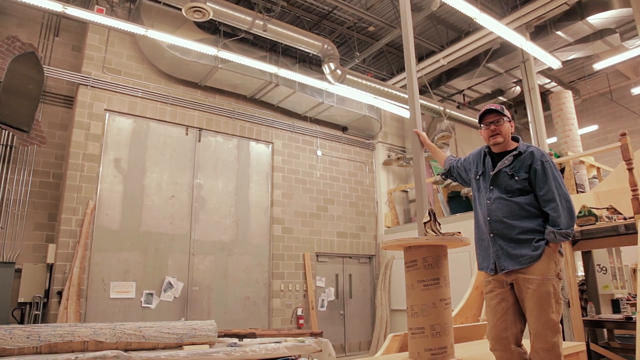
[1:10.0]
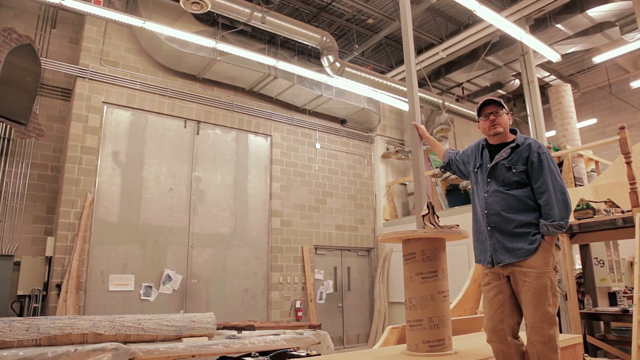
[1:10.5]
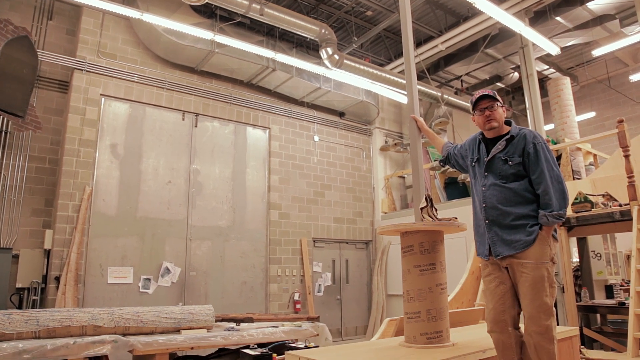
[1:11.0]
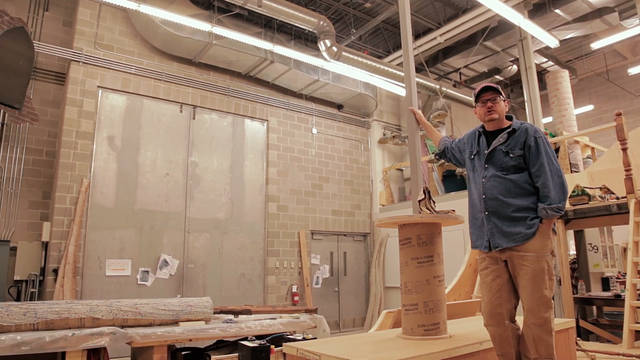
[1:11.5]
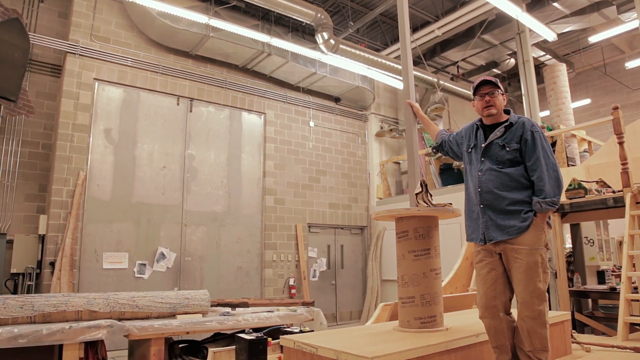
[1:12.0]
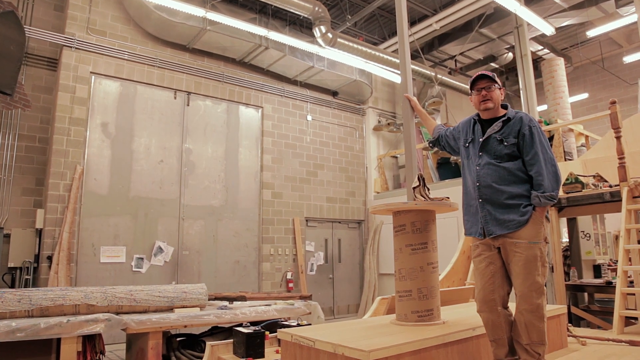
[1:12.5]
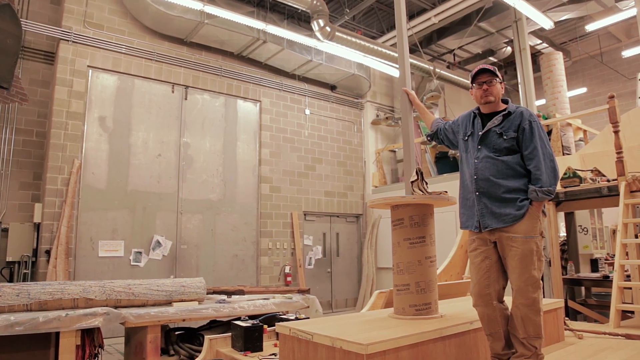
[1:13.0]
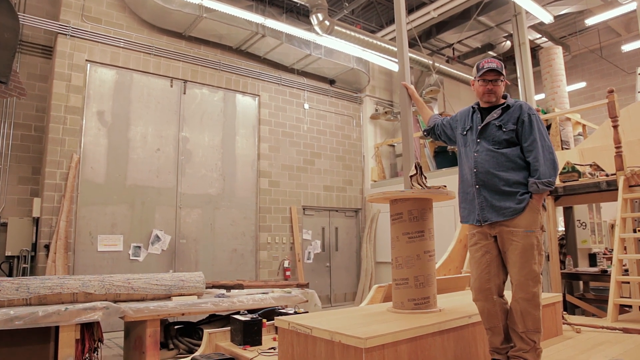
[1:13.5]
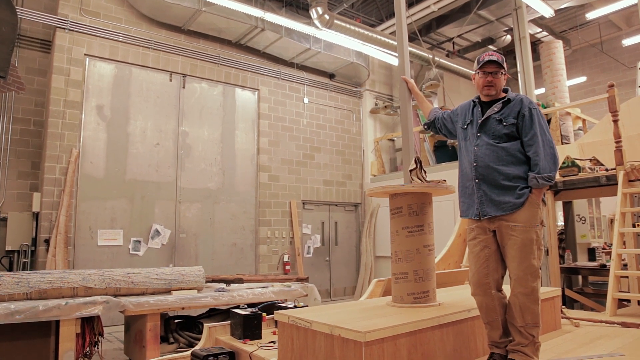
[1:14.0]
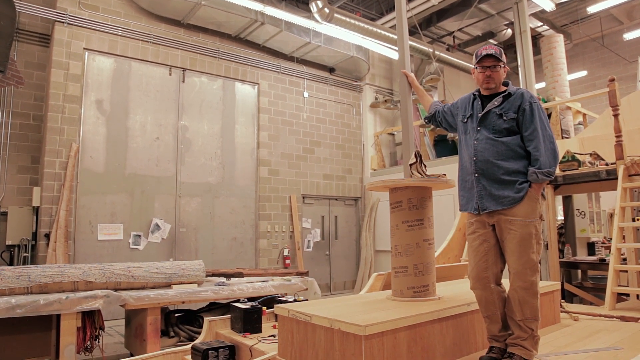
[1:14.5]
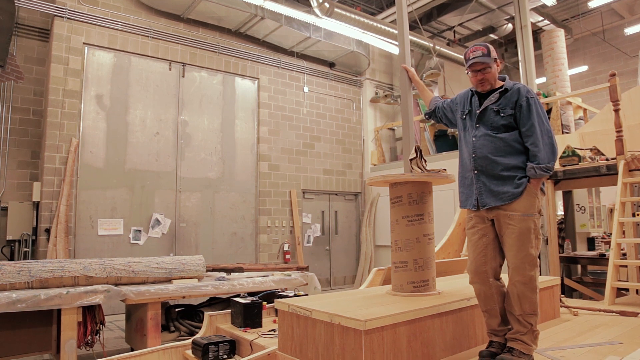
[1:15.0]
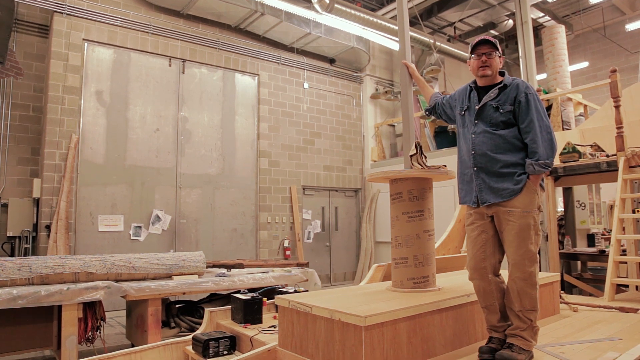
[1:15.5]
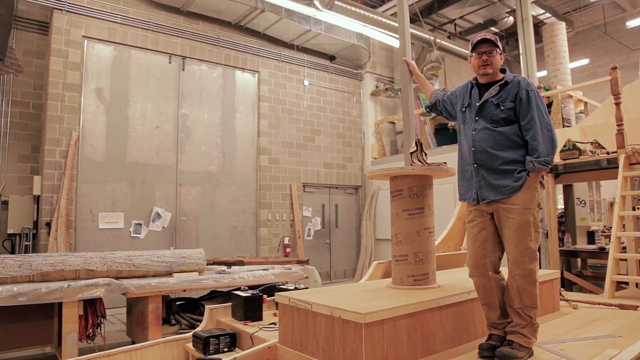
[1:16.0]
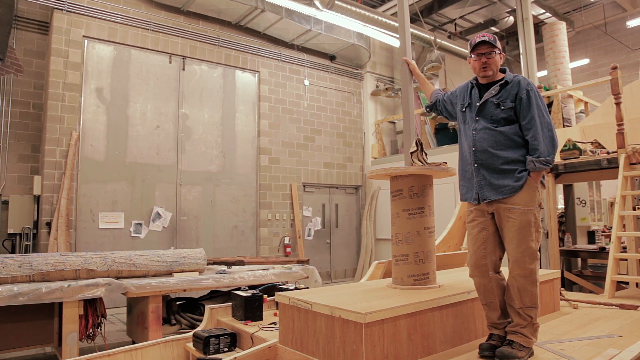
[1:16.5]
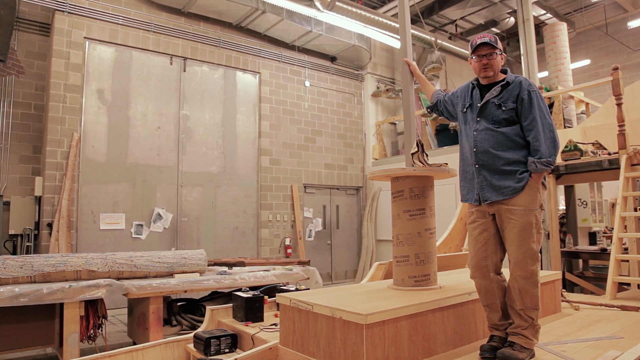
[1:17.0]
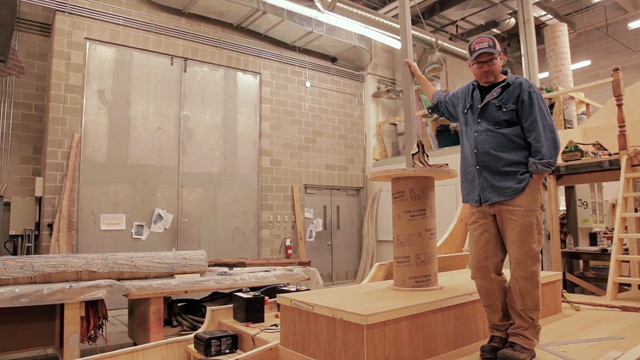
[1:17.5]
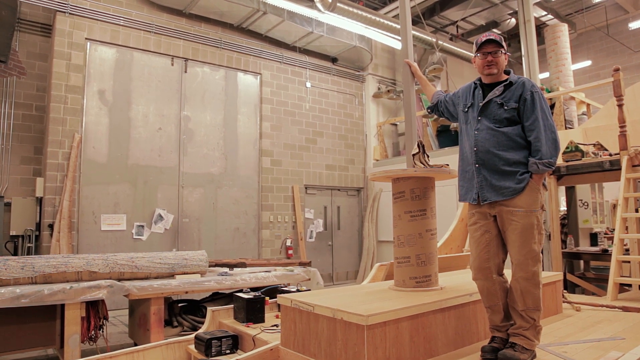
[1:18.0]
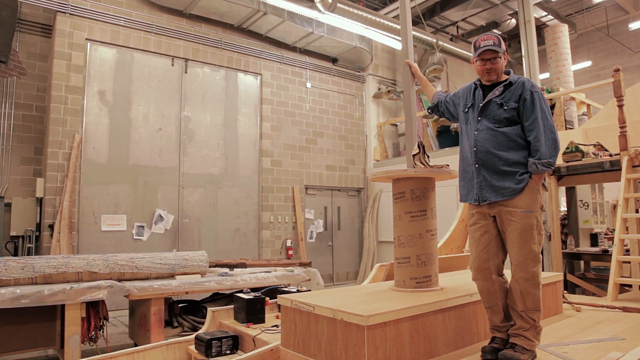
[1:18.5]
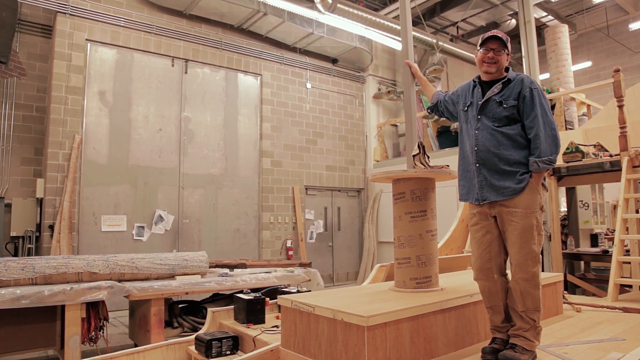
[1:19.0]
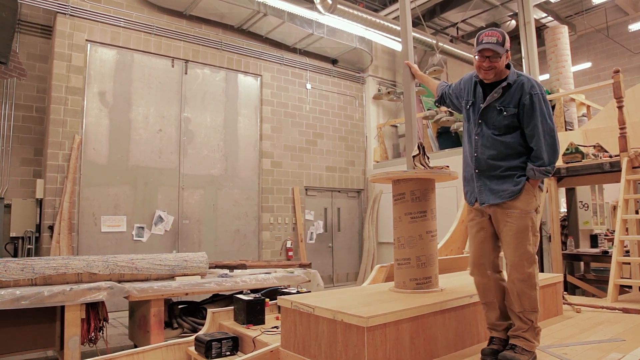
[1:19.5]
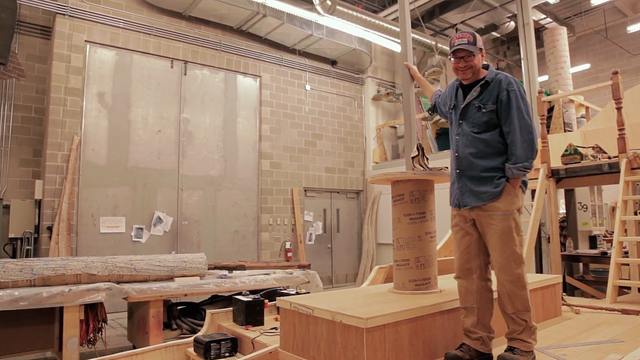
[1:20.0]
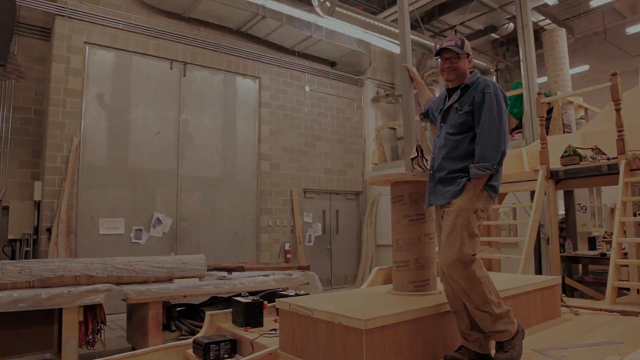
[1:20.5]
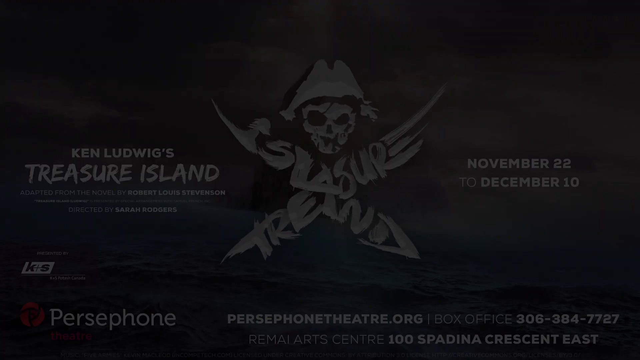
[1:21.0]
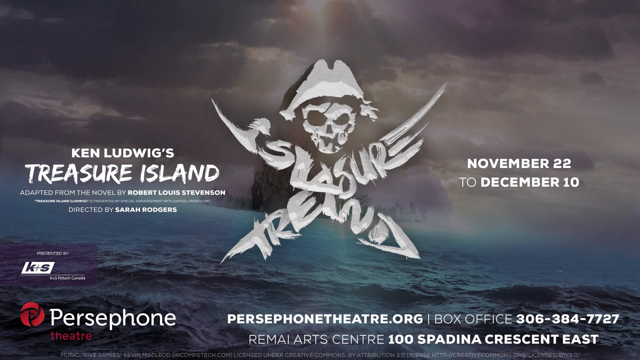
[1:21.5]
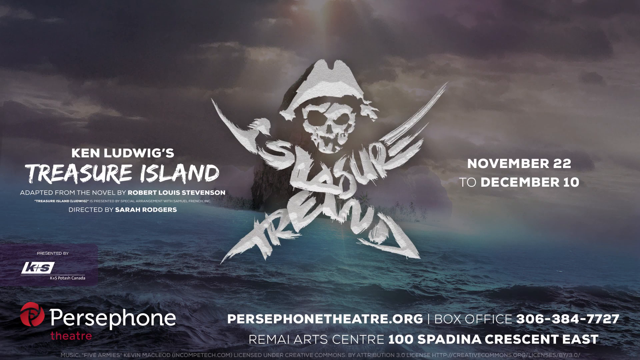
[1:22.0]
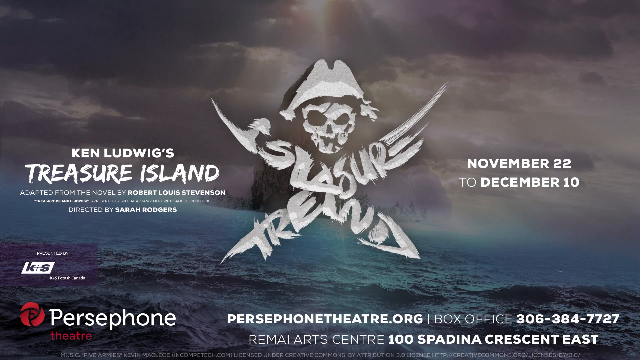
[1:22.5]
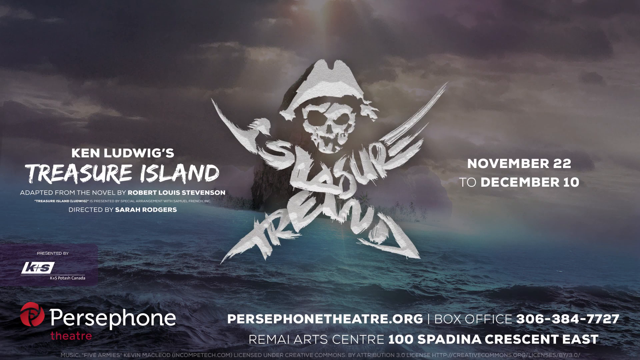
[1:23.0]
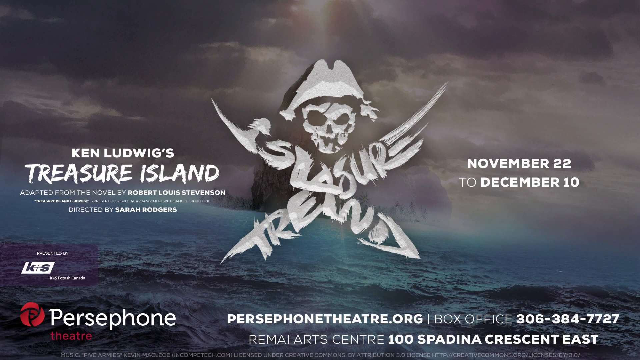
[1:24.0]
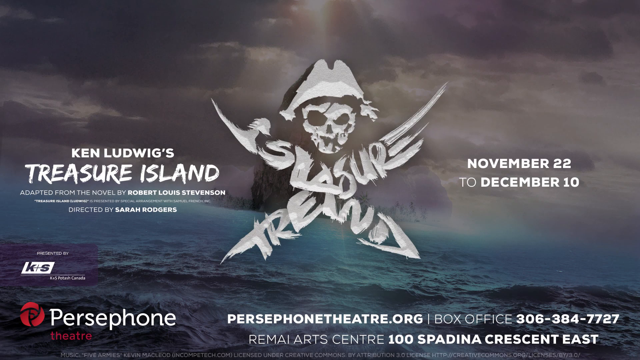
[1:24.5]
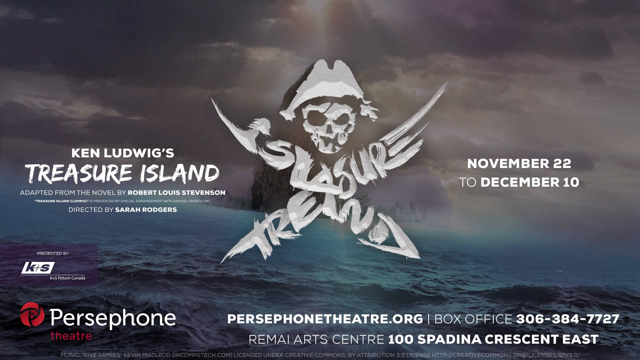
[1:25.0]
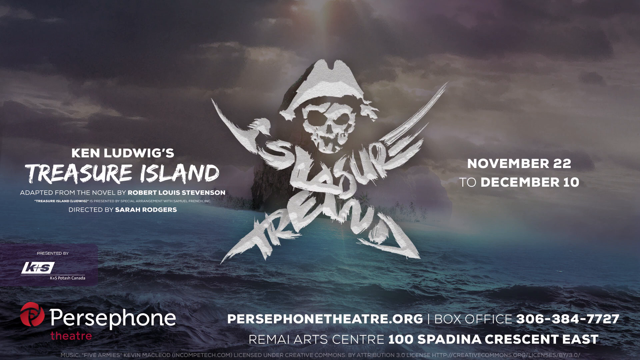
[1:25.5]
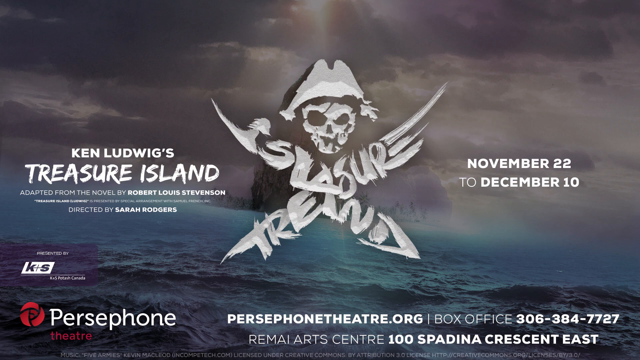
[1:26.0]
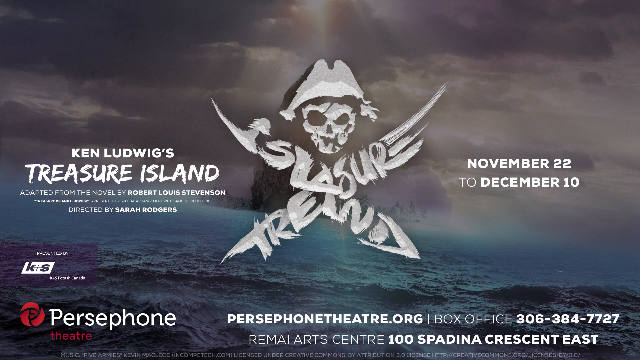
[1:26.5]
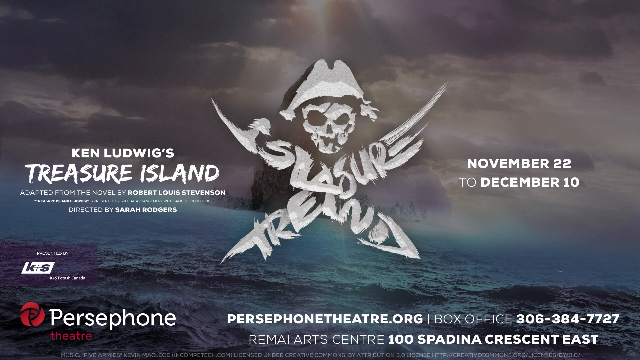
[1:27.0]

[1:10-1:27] A man wearing a denim t-shirt is standing in his garage building and seems focused on his work. Then what seems like a poster appears, reading "Treasure Island", with "November 22nd to December 10th" written on the right-hand side. The logo shows a skeleton with a crown and very dark blue waves. A display of small turrets is far behind. Numbers on the poster read "306-384-7777".